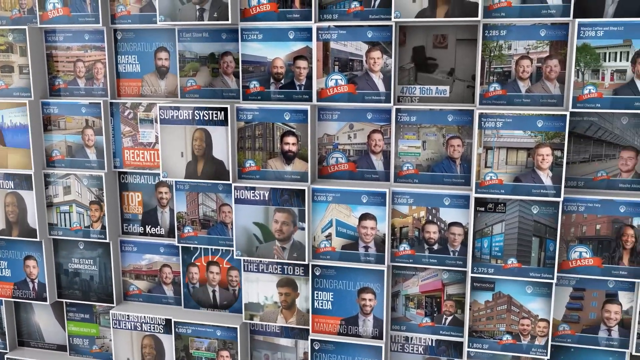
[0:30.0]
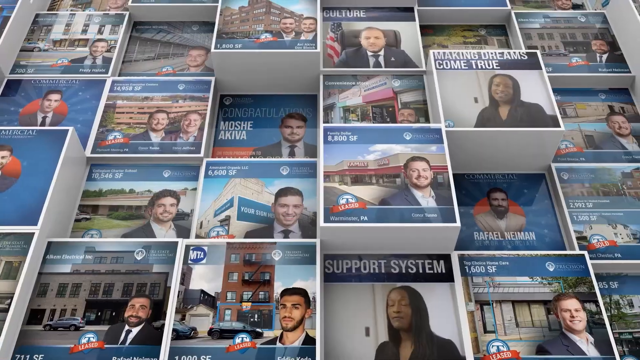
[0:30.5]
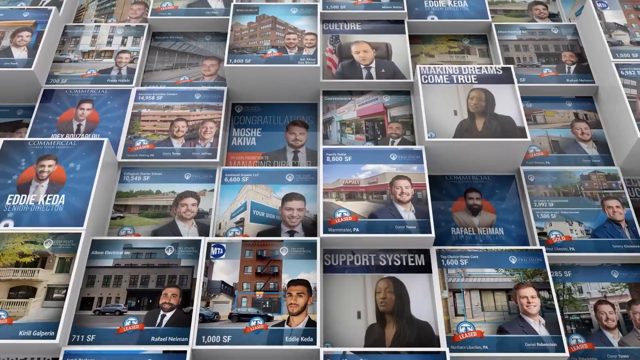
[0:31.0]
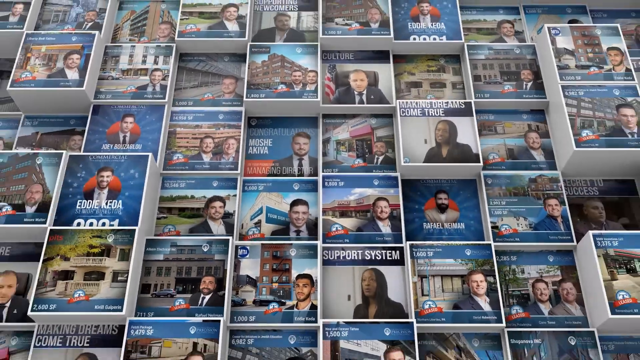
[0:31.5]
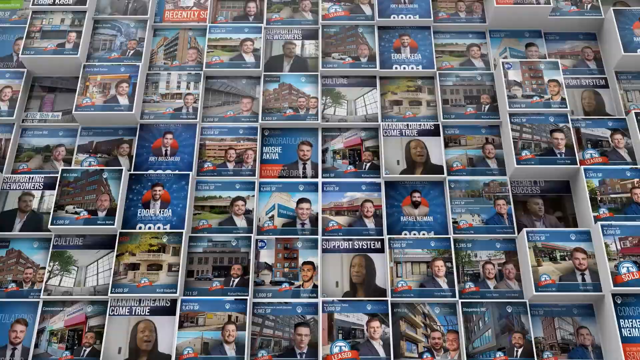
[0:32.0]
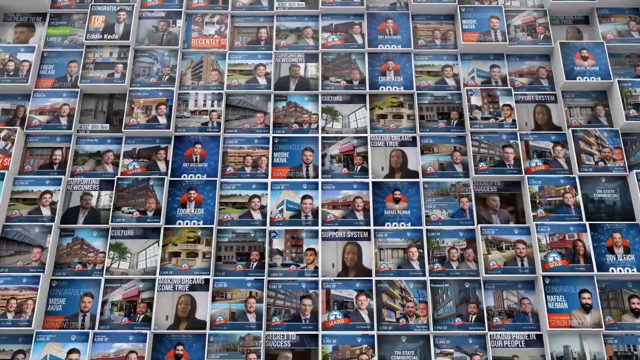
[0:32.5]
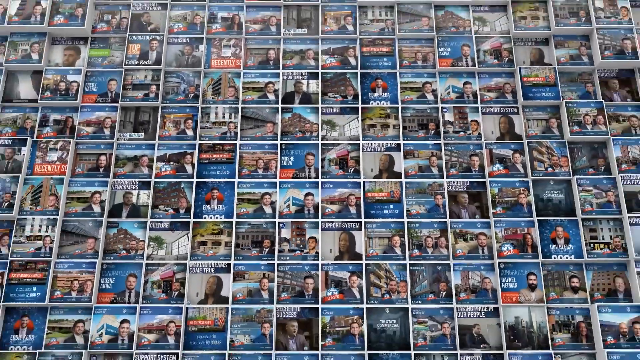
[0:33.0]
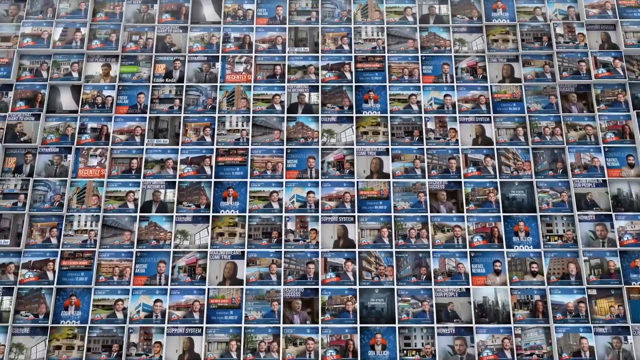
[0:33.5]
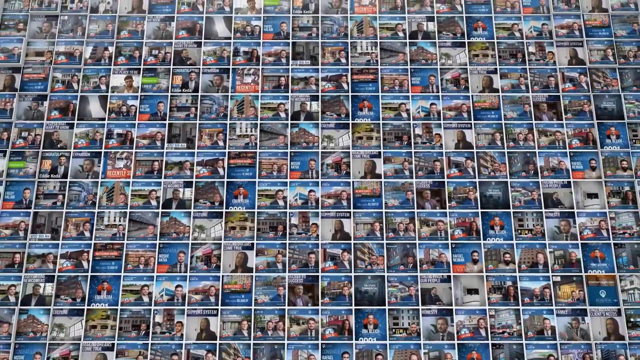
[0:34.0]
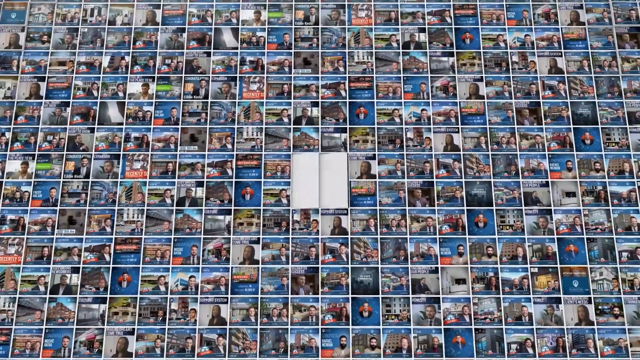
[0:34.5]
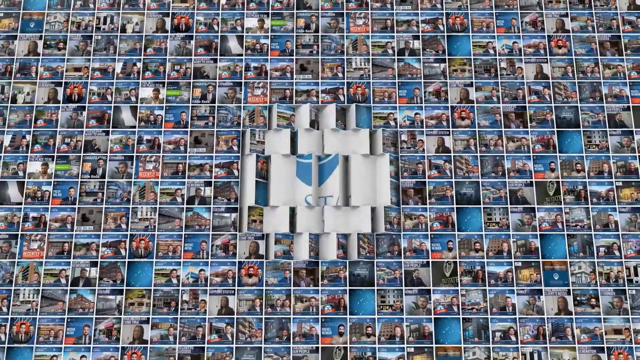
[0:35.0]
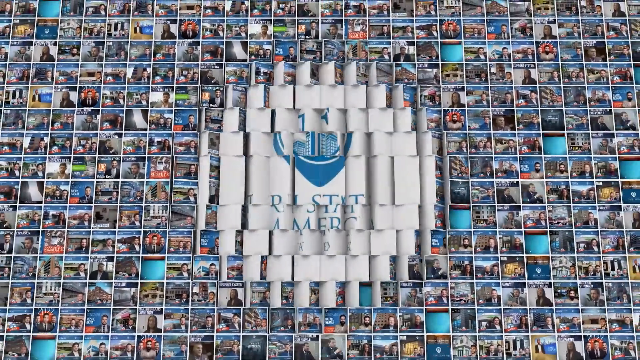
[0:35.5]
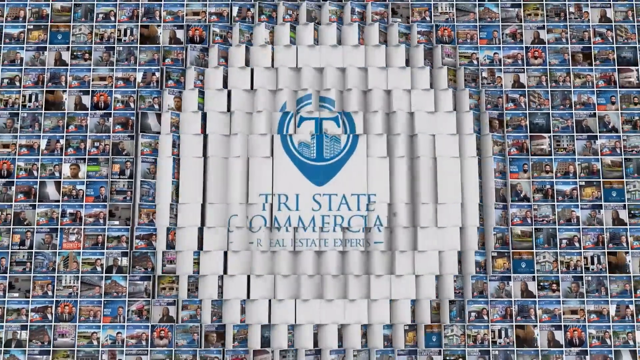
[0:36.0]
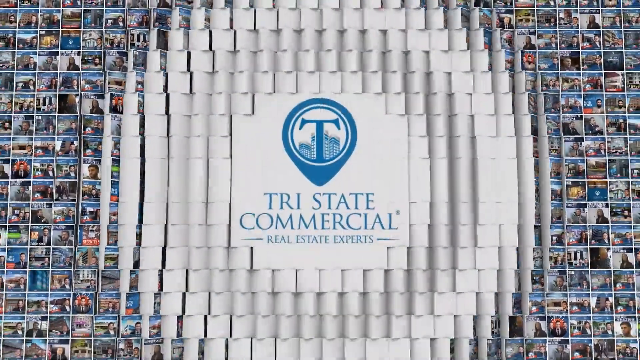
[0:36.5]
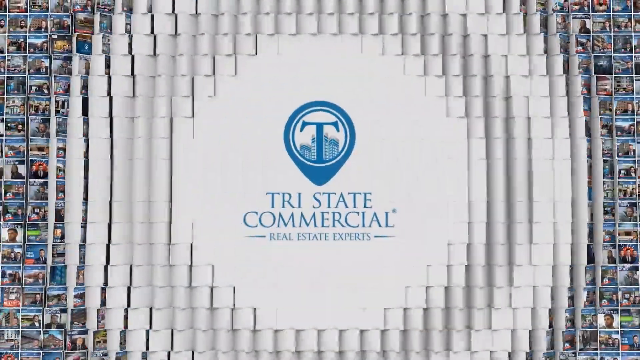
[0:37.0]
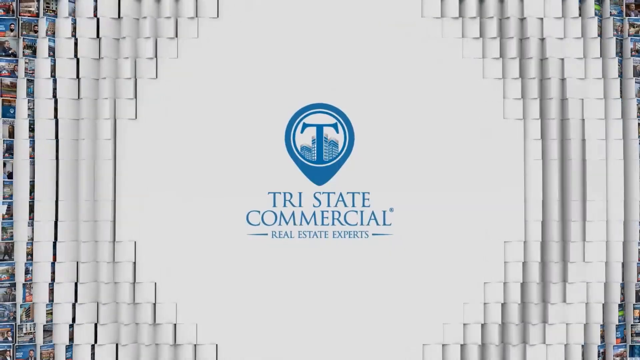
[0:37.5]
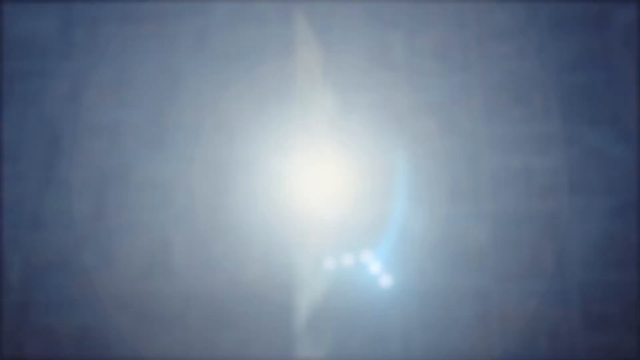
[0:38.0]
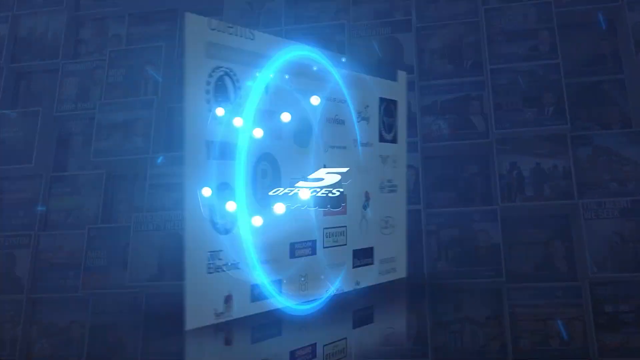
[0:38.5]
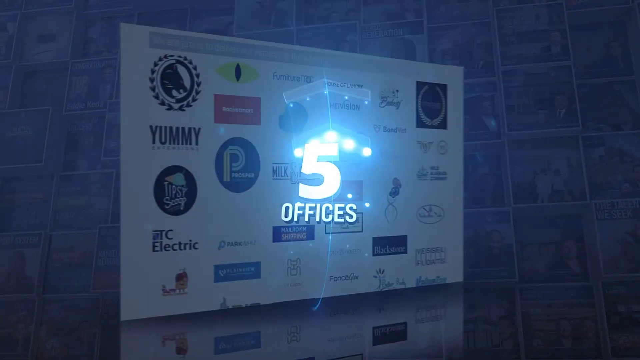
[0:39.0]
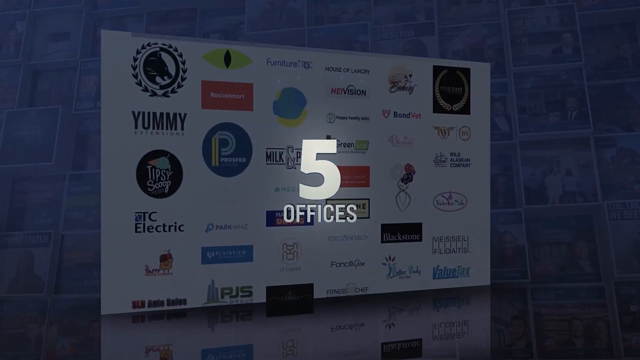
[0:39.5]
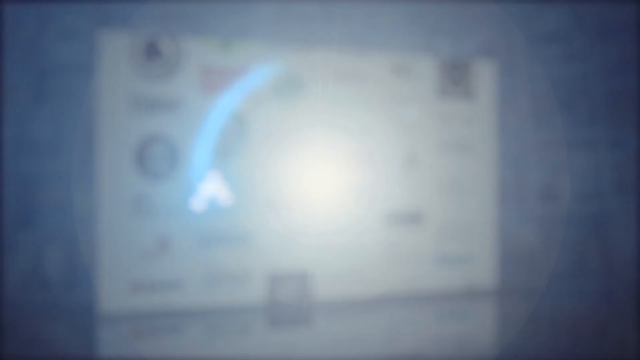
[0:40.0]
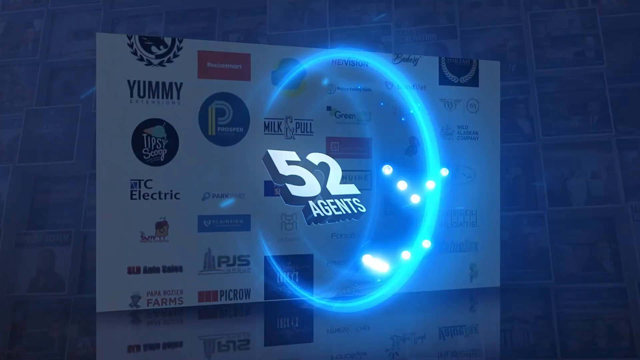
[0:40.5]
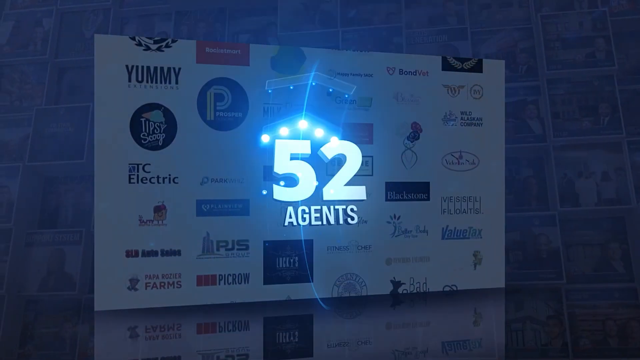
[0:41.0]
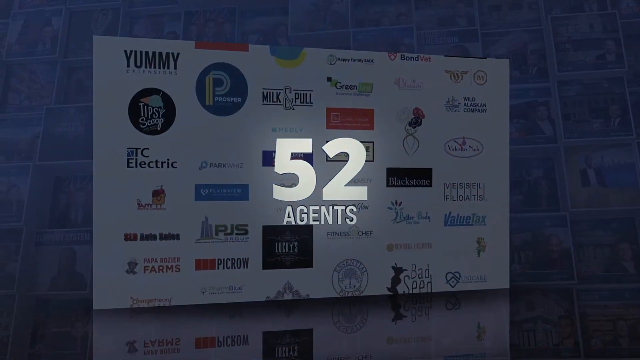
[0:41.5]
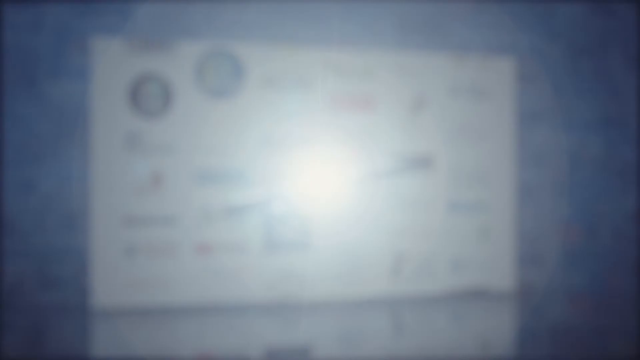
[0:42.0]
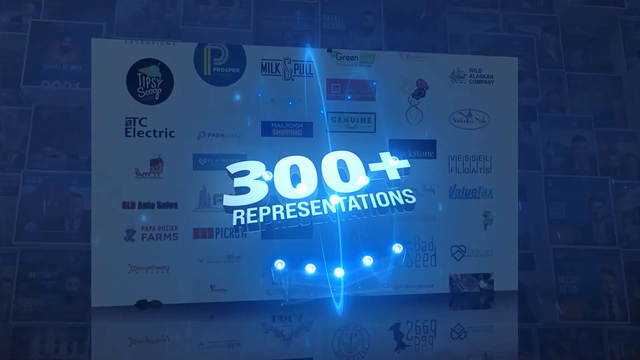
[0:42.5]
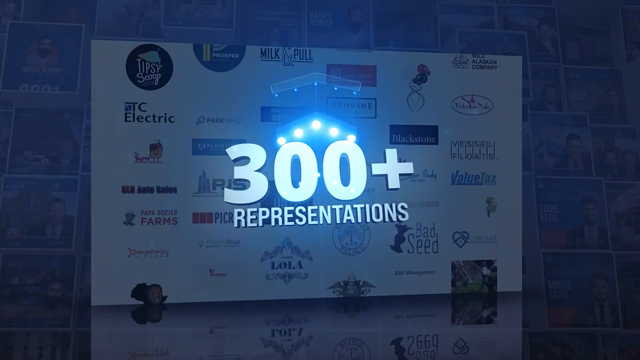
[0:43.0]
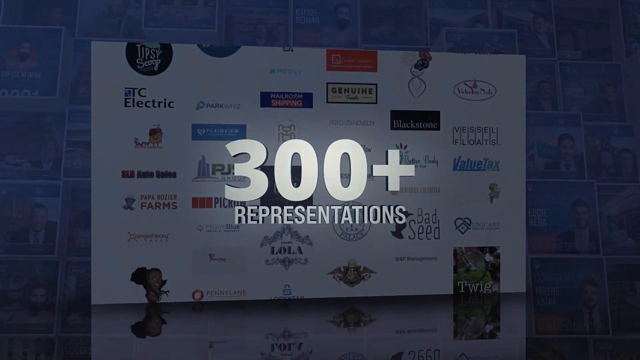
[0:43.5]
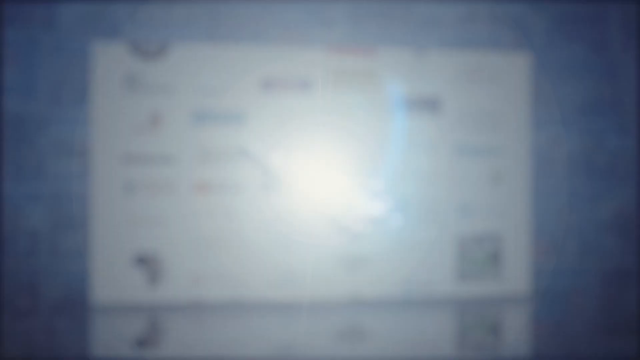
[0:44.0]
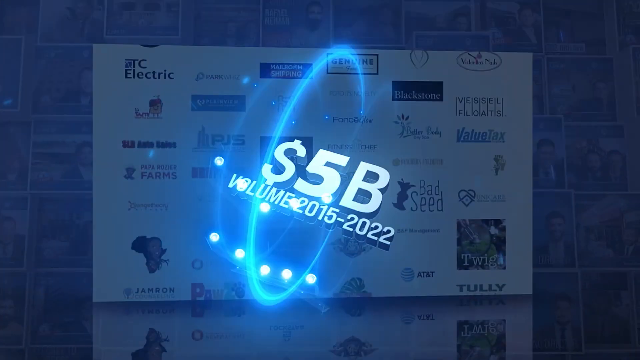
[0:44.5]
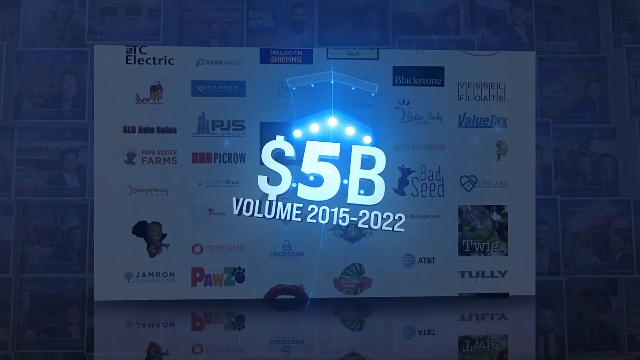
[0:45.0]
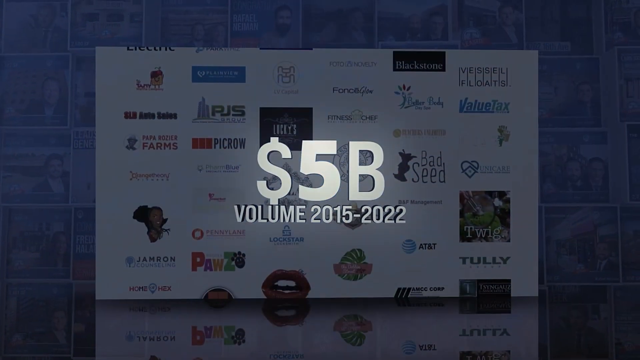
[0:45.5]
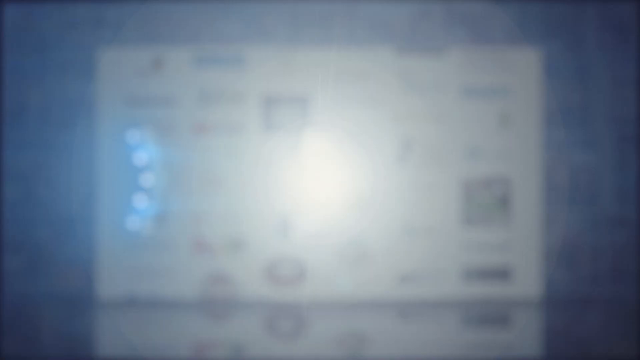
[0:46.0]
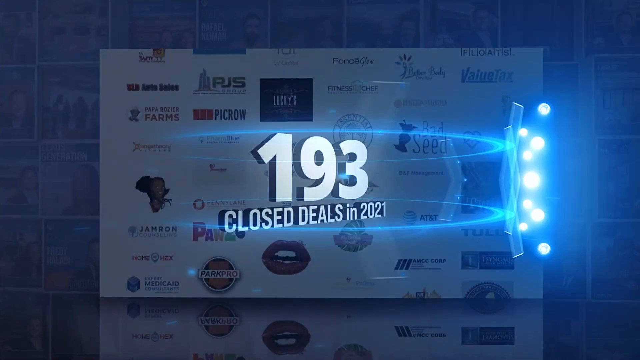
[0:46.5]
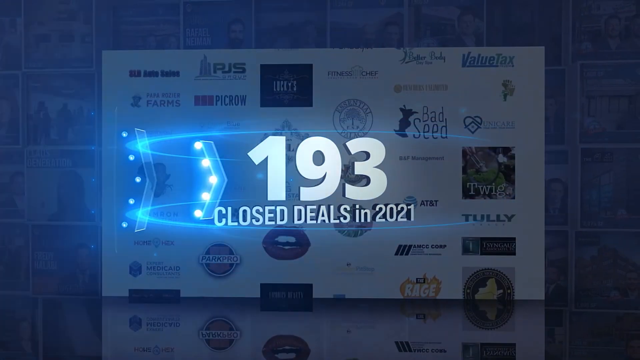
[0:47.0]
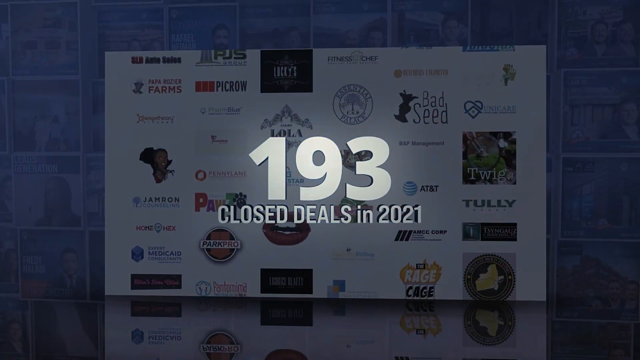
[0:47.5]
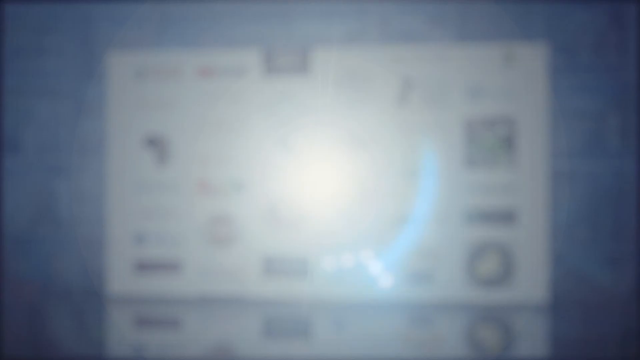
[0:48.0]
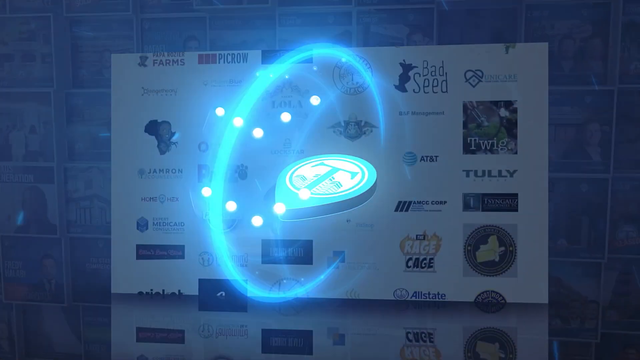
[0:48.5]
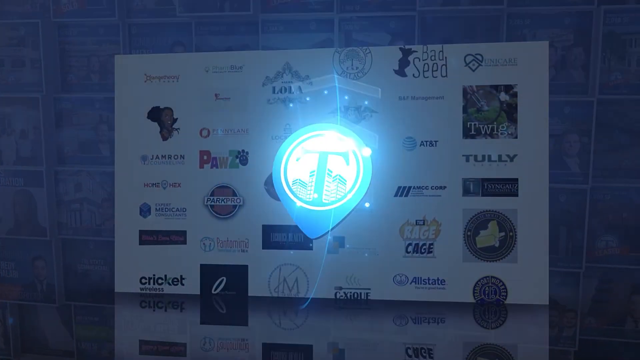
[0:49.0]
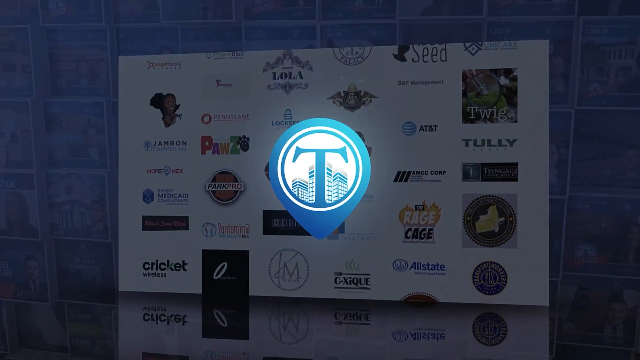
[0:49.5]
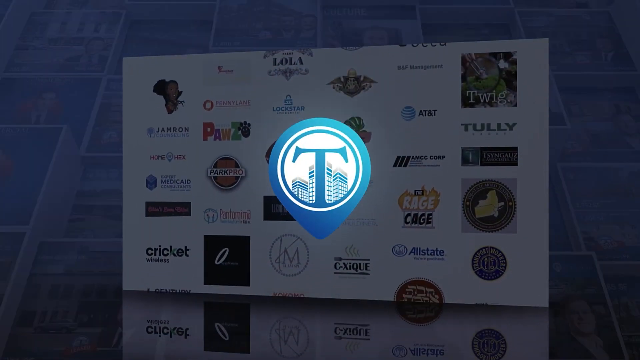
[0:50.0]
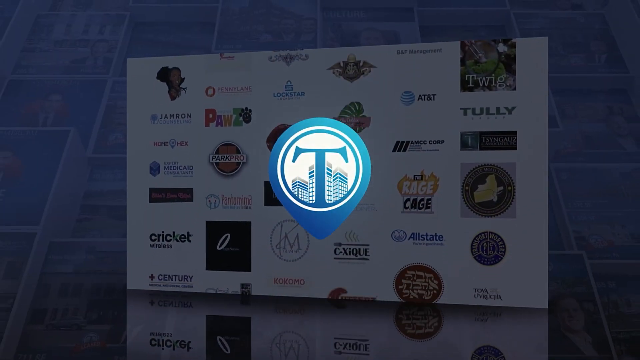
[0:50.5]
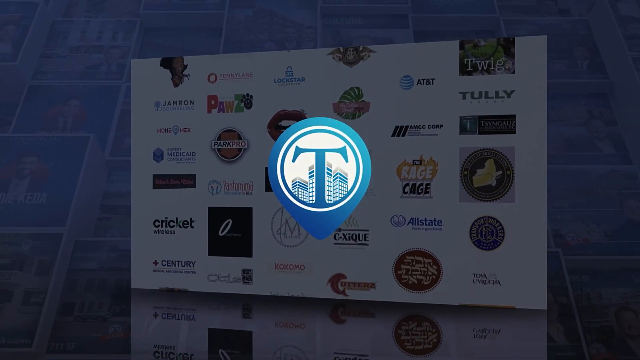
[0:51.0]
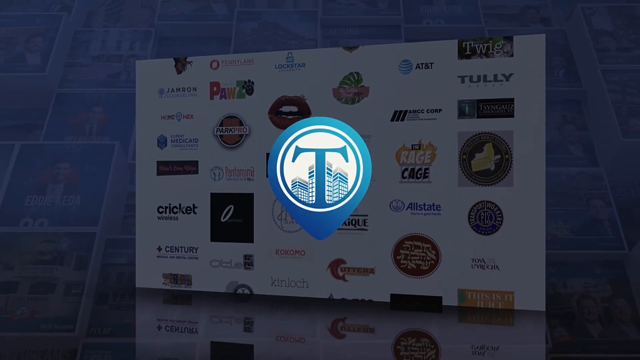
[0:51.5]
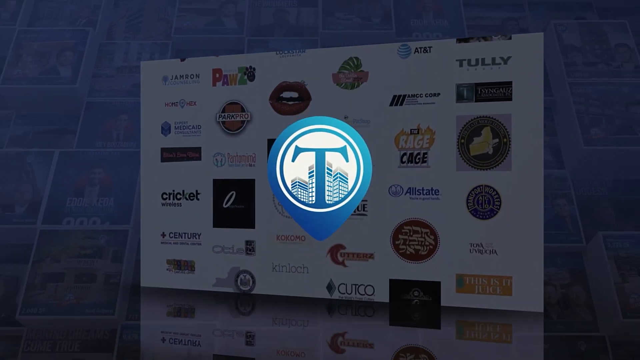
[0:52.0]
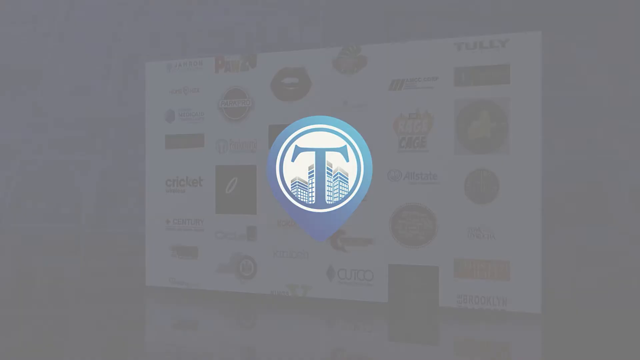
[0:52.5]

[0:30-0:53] The digital posters are seen from an even greater distance. There are probably around a hundred different employees and probably about 300 separate boxes. Text states that the business is called Tri-State Commercial Real Estate and that it has five offices, 52 agents, over 300 representations, and five billion sold, with deals since 2015. Sponsors appear at the end of the video, including Cricut, Tully, Lola and Allstate.